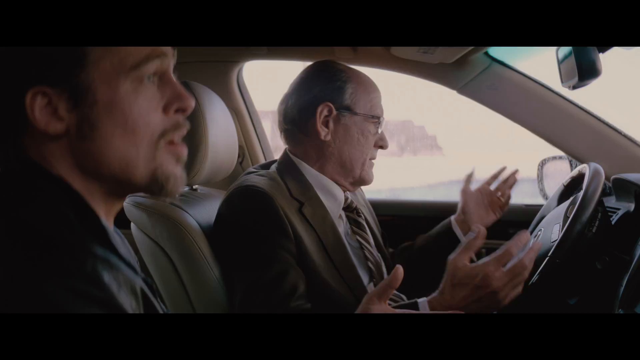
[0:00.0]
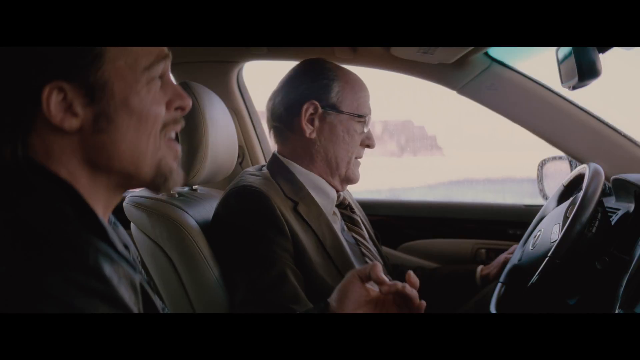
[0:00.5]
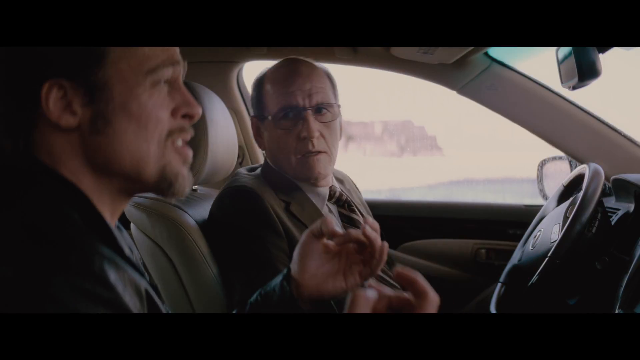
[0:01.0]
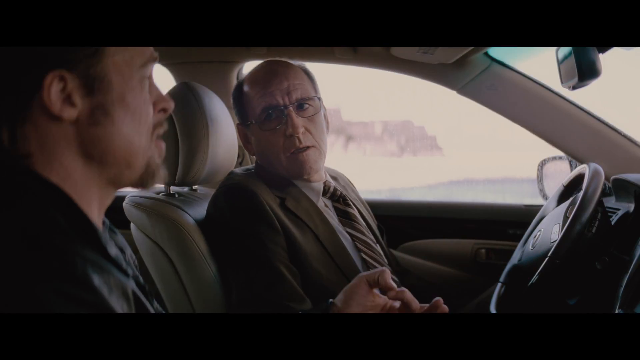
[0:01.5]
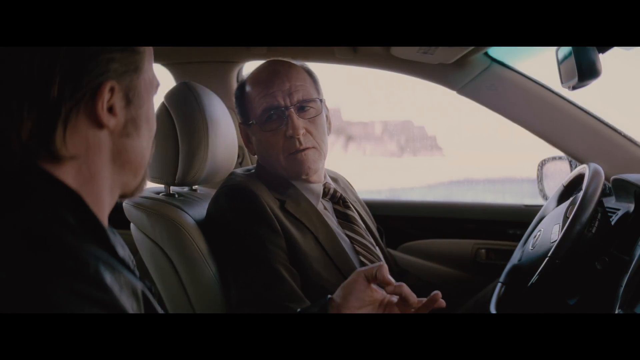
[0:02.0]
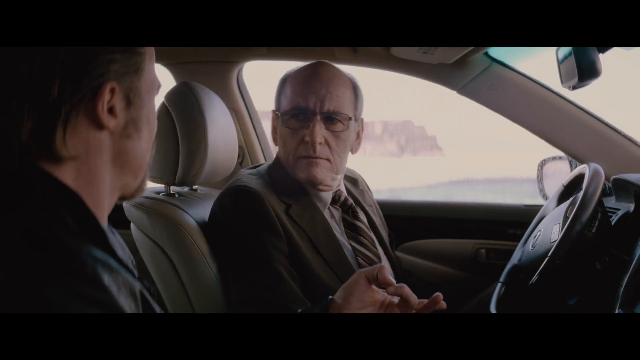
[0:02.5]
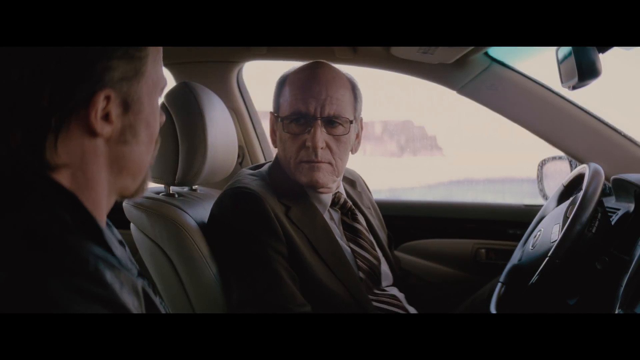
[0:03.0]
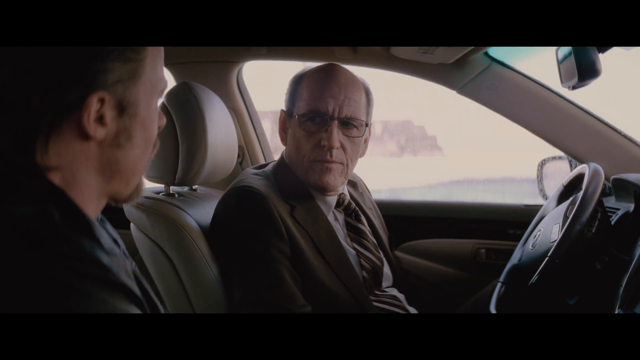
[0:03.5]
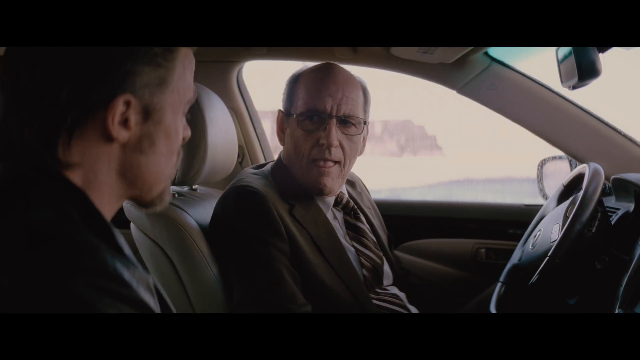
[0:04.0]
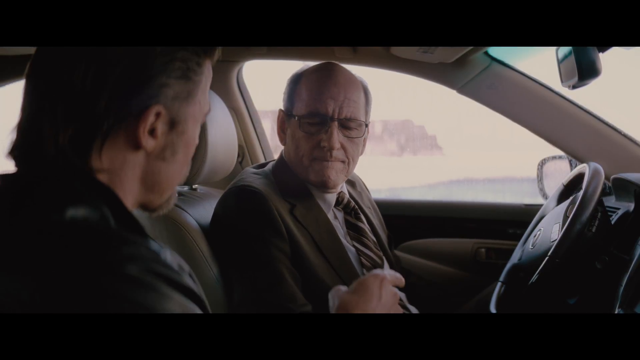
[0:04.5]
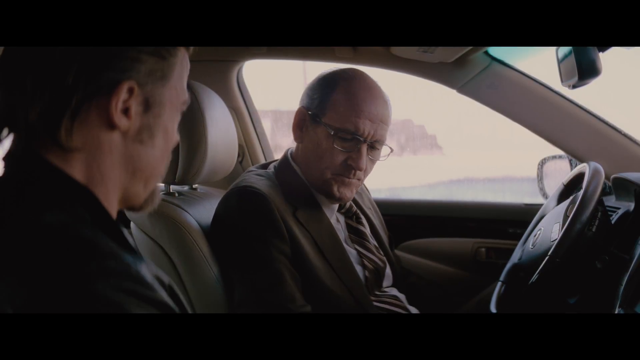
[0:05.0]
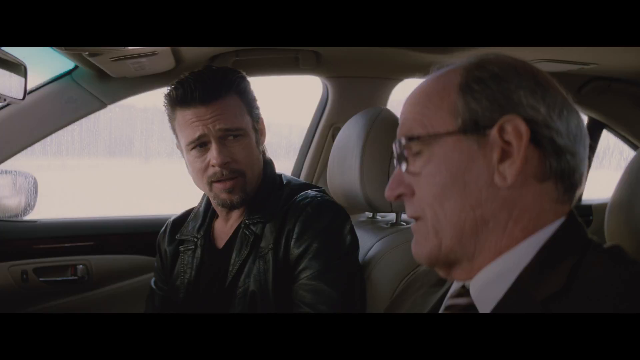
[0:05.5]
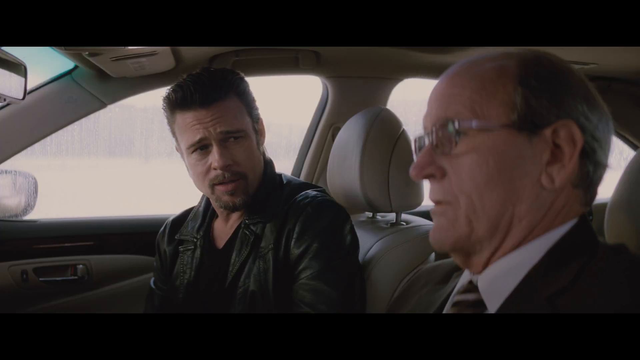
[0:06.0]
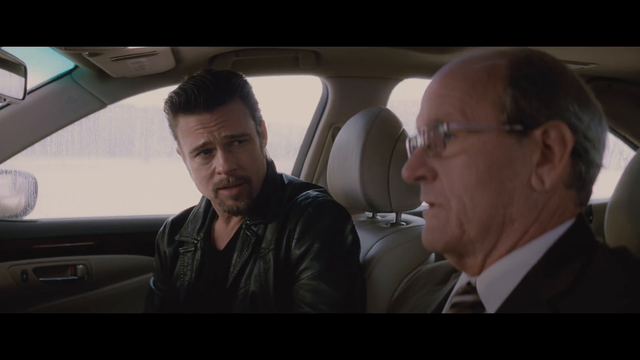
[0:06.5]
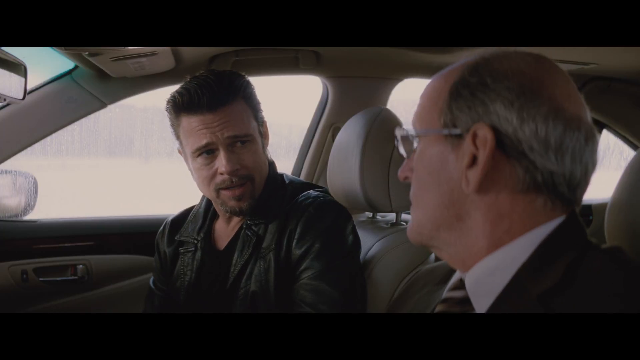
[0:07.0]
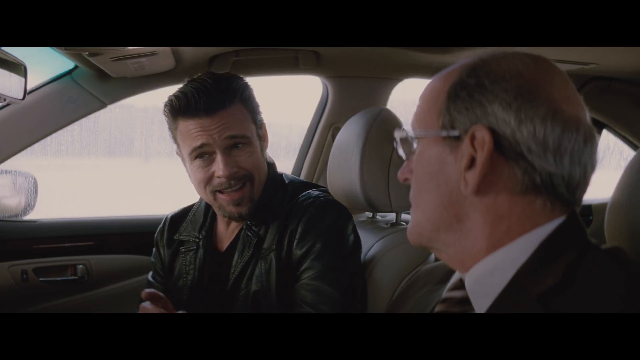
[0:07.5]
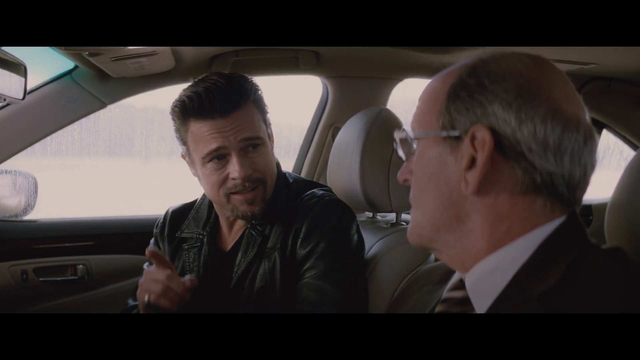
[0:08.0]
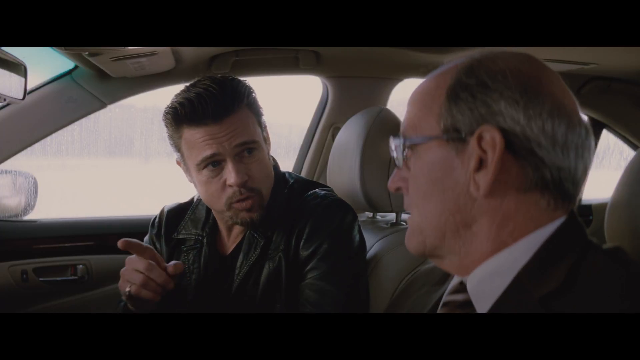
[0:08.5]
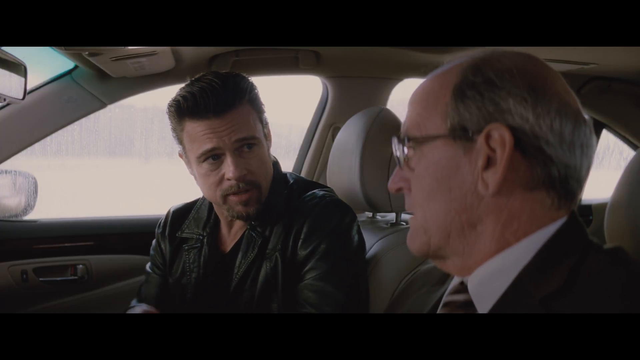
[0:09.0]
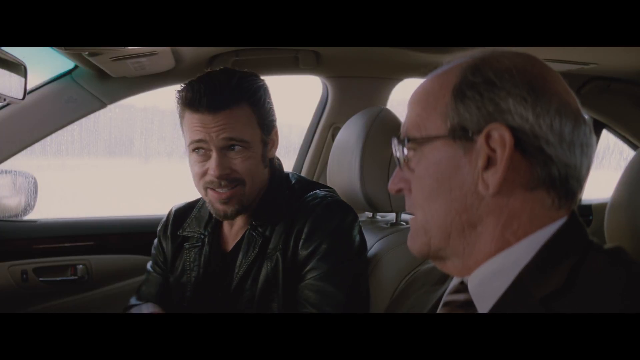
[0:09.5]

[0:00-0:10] Two men are in a car. An older man with glasses is in the driver's seat, with a black steering wheel to the right, and he is sort of looking at the other man, who is on the left side of the frame. That man has a mustache and appears to be Brad Pitt; he sort of points at the older man. The shot then switches to Brad Pitt, who looks somewhat concerned as he looks at the other man, and he sort of points outside, appearing concerned about something. The car's interior is a beige-like color.